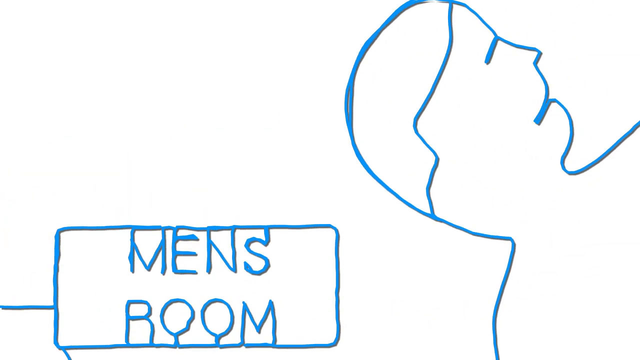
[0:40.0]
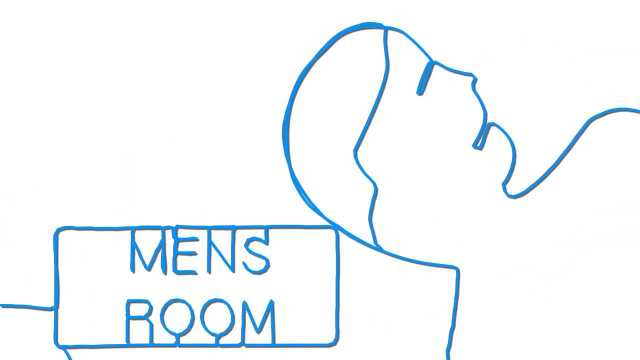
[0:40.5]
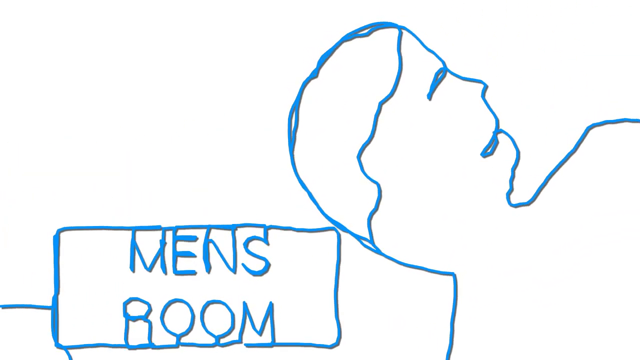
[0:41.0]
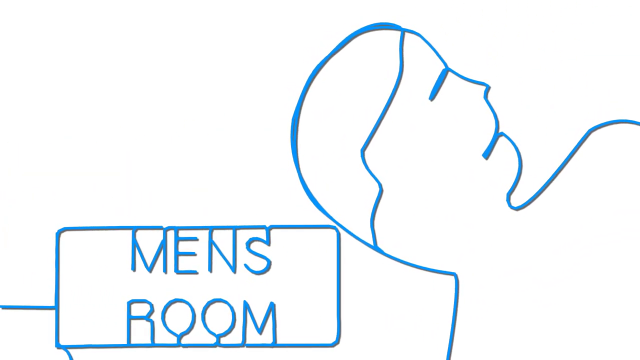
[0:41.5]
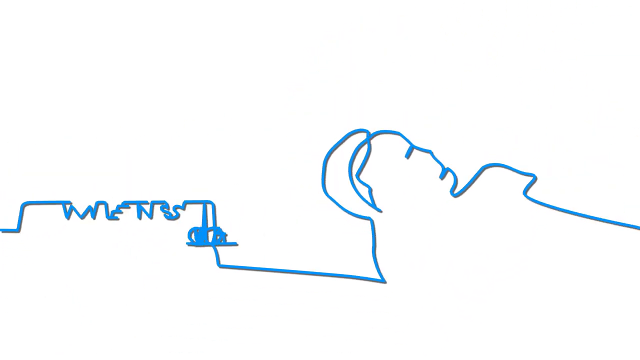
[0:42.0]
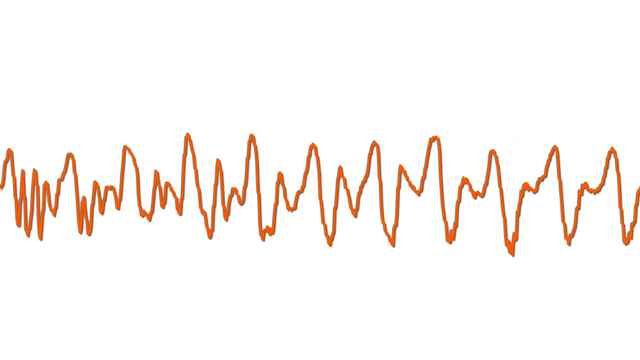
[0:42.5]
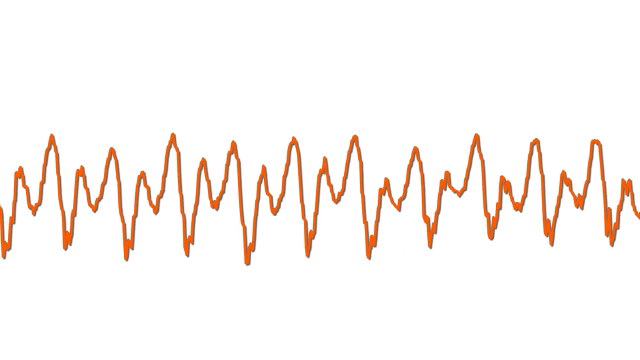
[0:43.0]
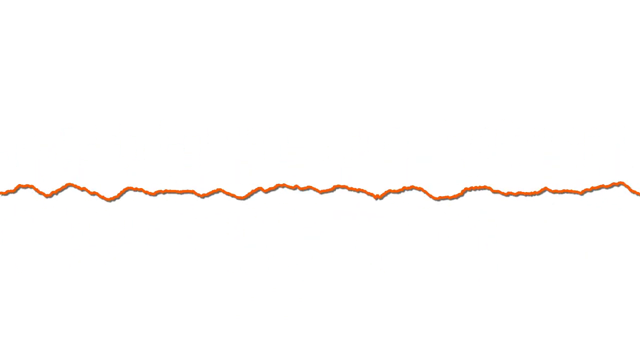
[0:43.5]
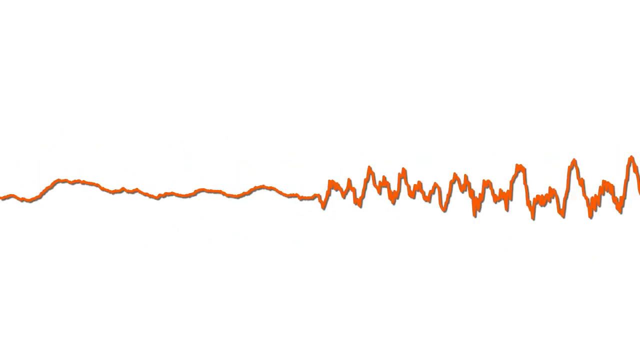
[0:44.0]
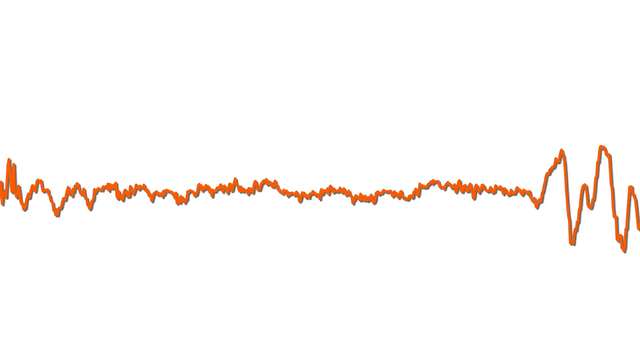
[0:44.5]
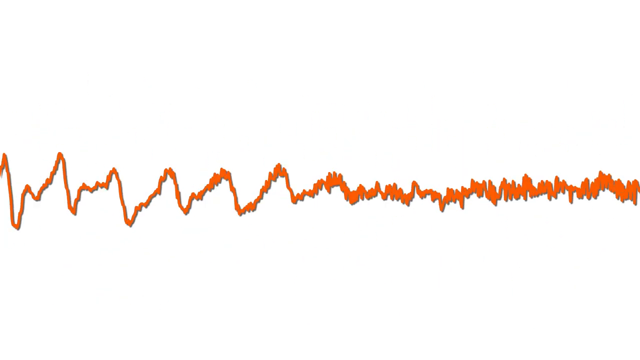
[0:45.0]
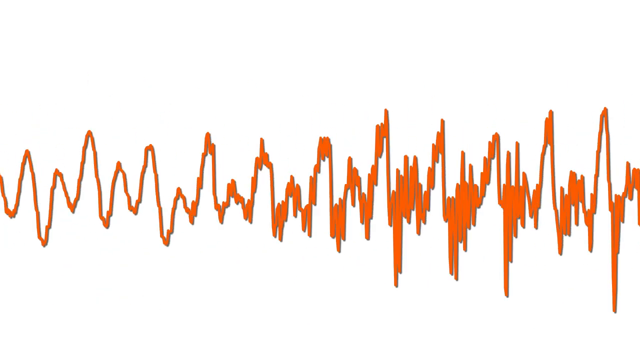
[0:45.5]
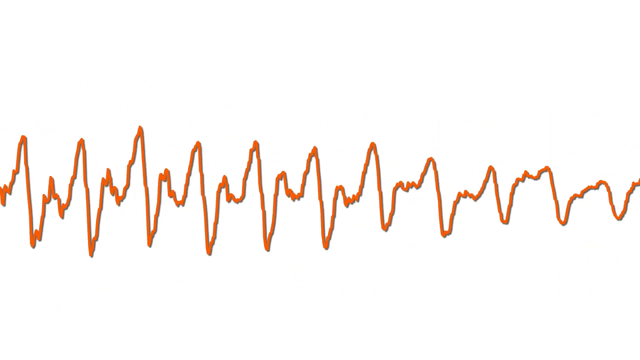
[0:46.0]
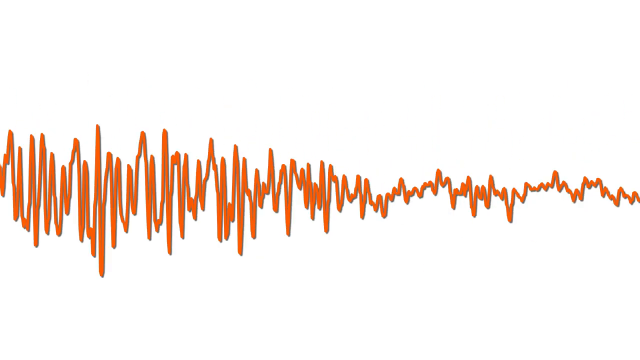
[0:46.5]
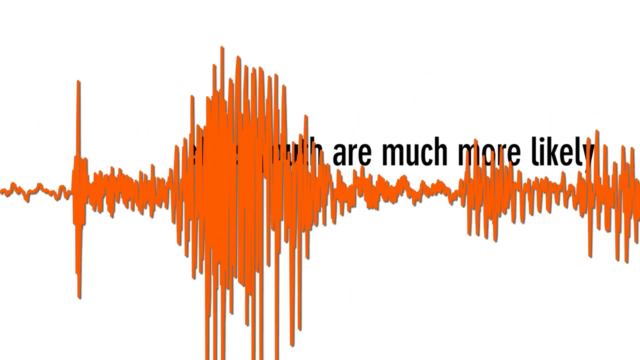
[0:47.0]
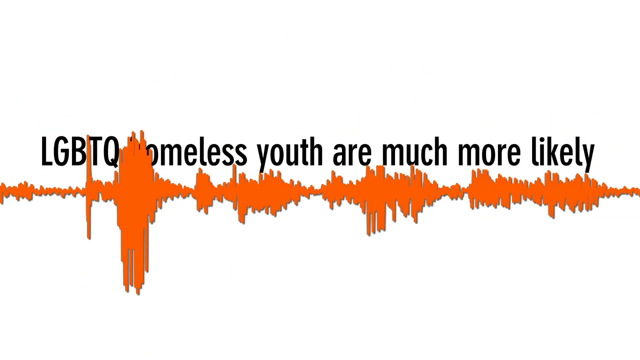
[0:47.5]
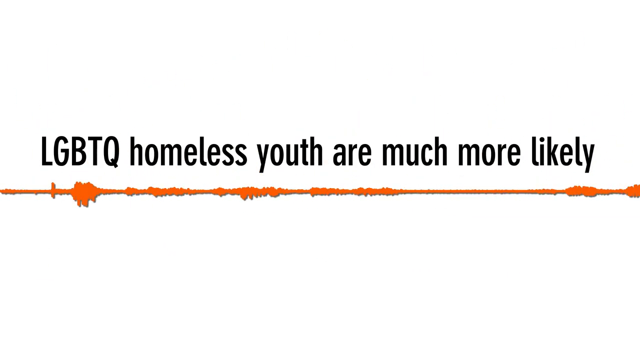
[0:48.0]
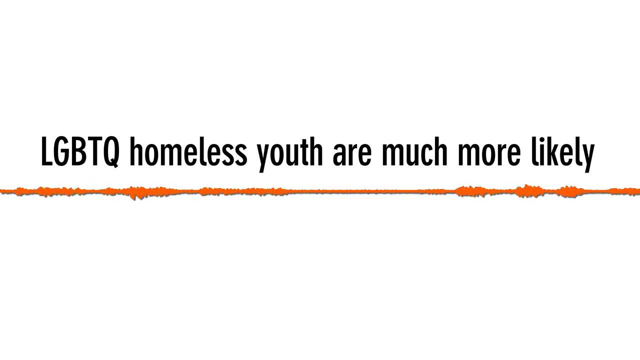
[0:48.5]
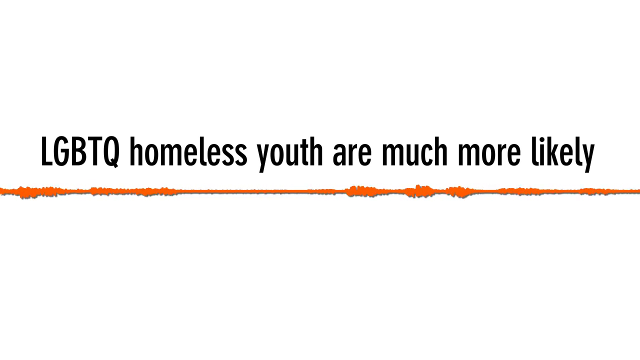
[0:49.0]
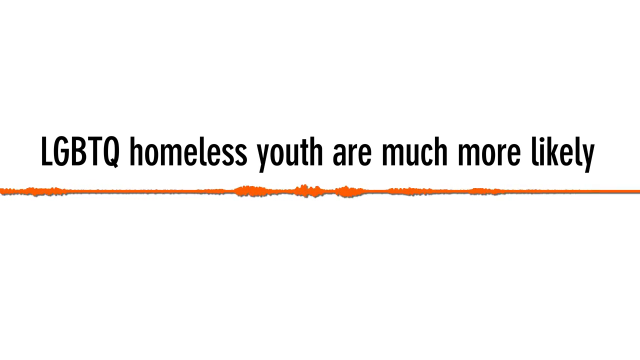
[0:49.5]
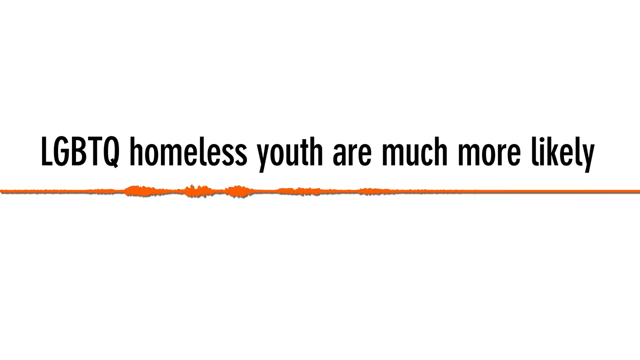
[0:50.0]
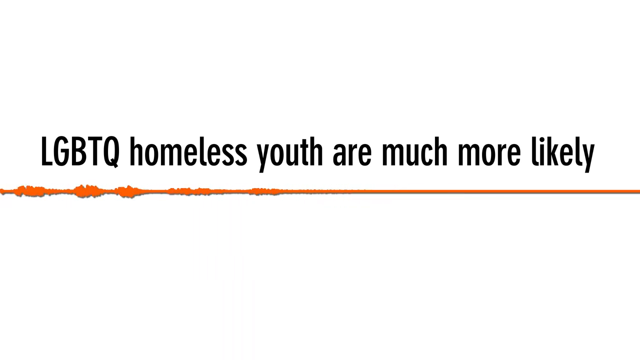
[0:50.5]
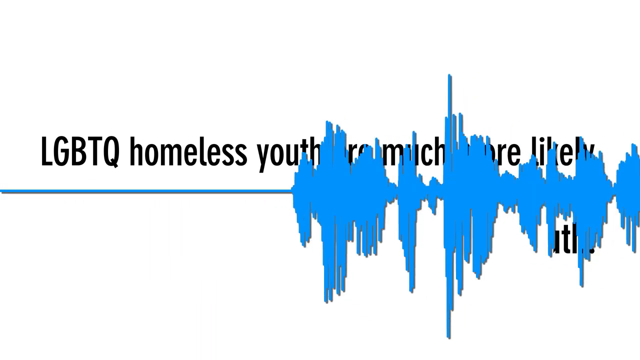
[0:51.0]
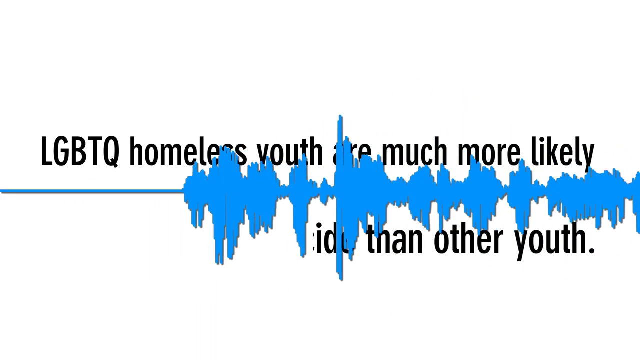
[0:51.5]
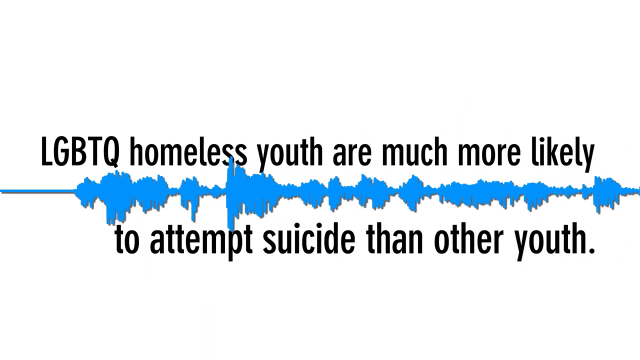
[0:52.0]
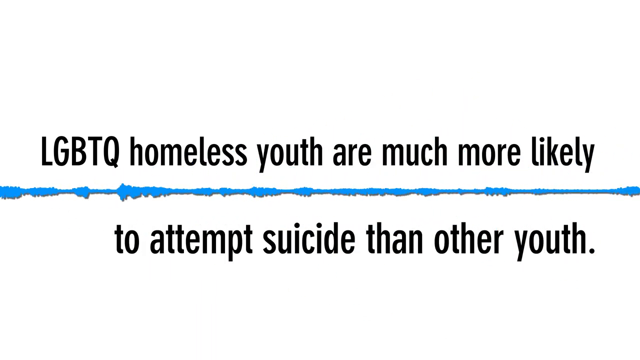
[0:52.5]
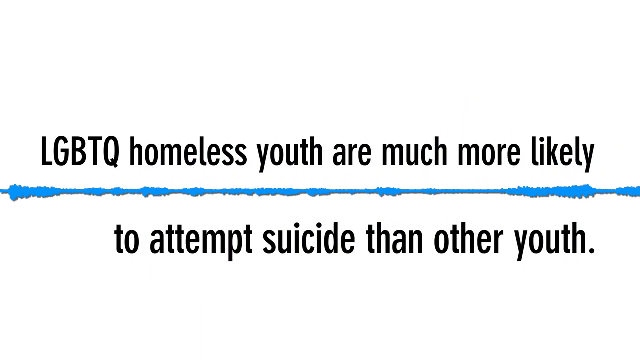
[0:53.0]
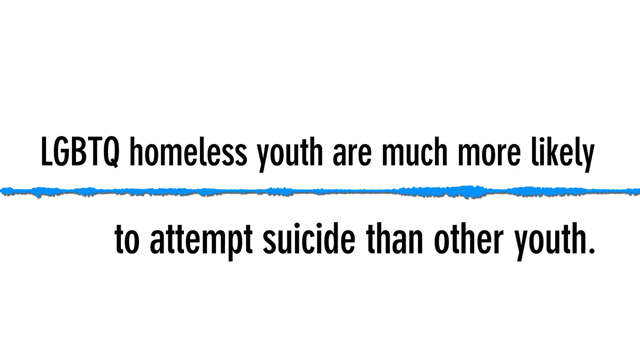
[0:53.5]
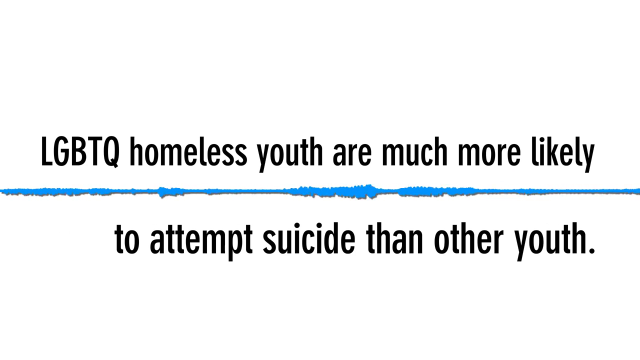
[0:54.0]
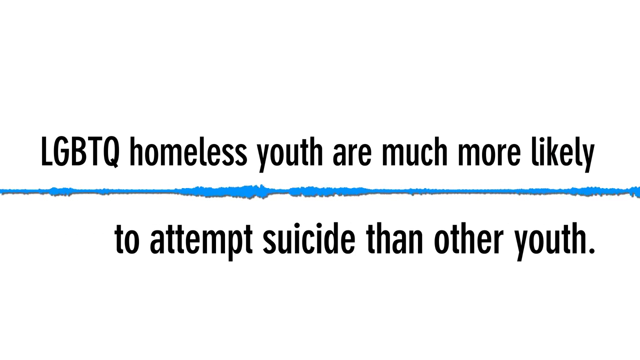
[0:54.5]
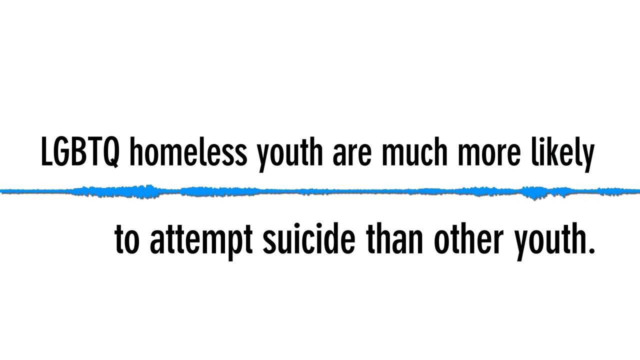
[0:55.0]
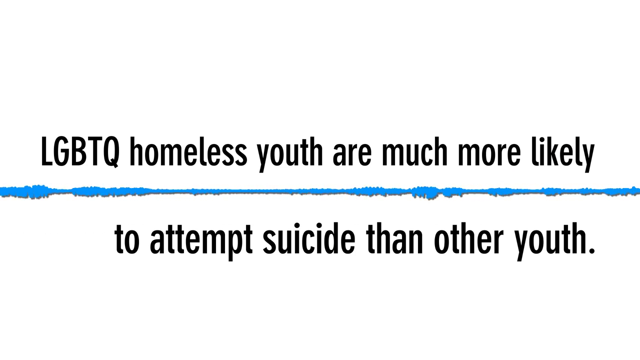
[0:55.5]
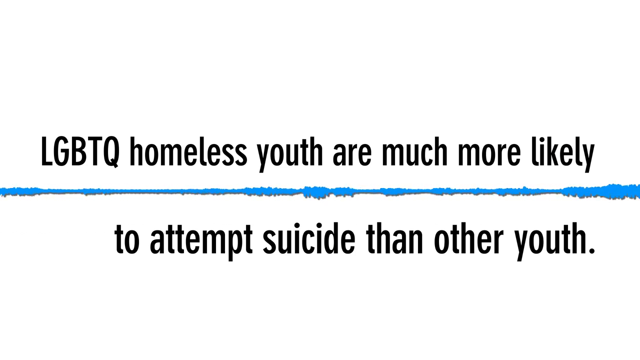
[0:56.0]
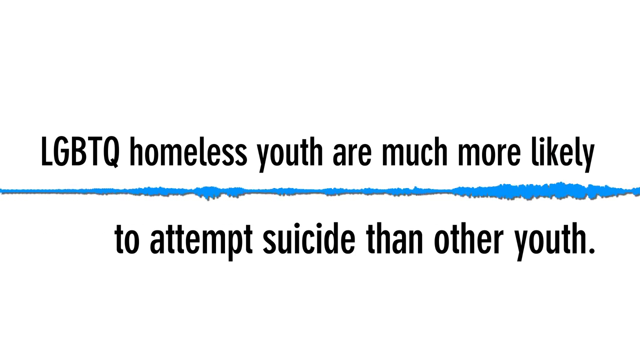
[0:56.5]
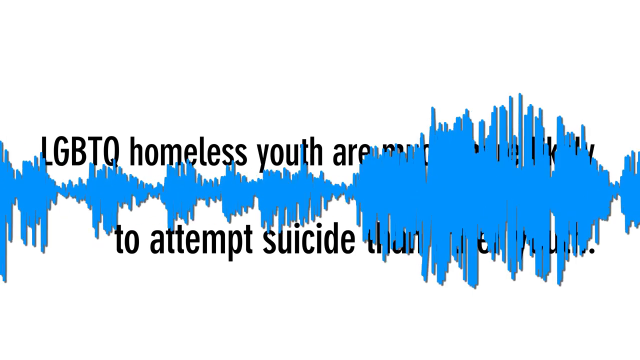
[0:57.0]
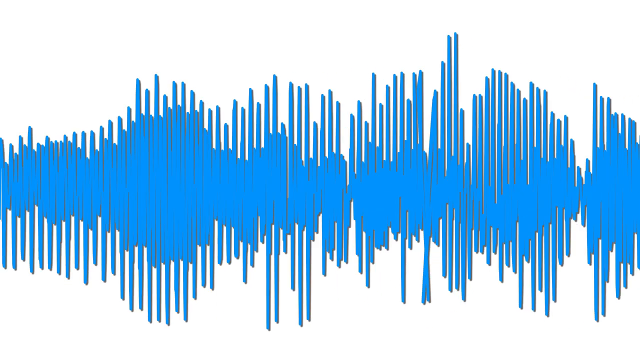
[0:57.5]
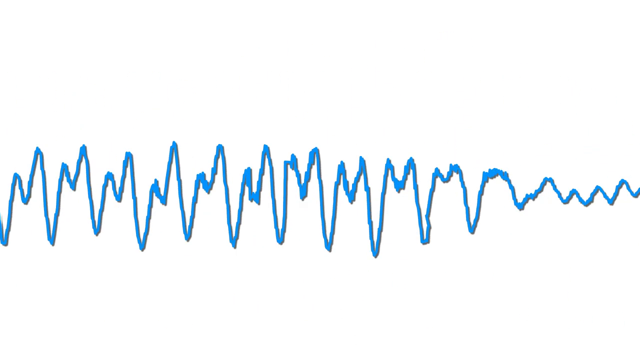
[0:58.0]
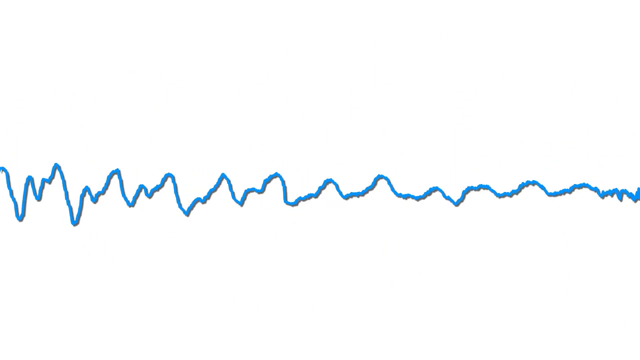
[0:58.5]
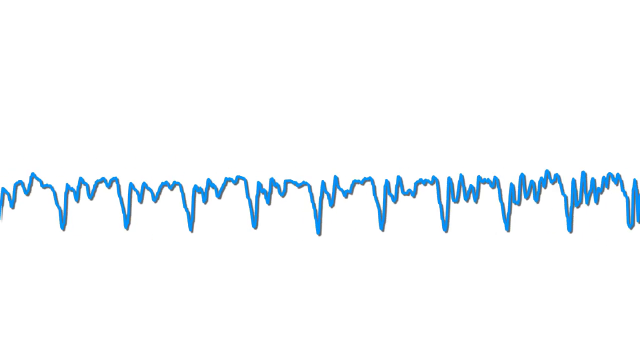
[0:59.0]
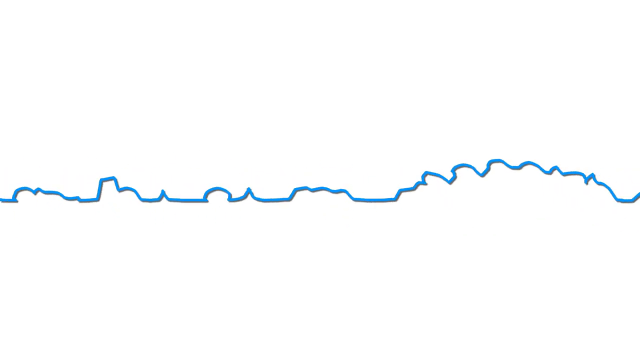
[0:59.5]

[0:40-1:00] A blue man's head faces the top right corner, drawn as a simple line drawing; a zigzag line across the top of his head separates off the part that is his hair. The man is laid down, sort of resting the back center of his head on the rectangle that says "man's room". Everything is connected by the line, and the ends of each letter in "man's" and "room" connect to the horizontal parts of the box above and below them. The image shakes a few times and turns back into a horizontal line, which then becomes an orange line. It forms a horizontal line with little oscillations throughout, looking maybe like a recording of people talking, and the sound line moves a little. Above it, words read "LGBTQ homeless youth are much more likely". The little lines stop and move off screen to the left. The orange horizontal line turns blue as more oscillations come through, and more words appear below the line, continuing the sentence: "to attempt suicide than other youth". The fuzzy oscillation lines then get very big and remove all the text as they cover the entire screen before forming a new image.